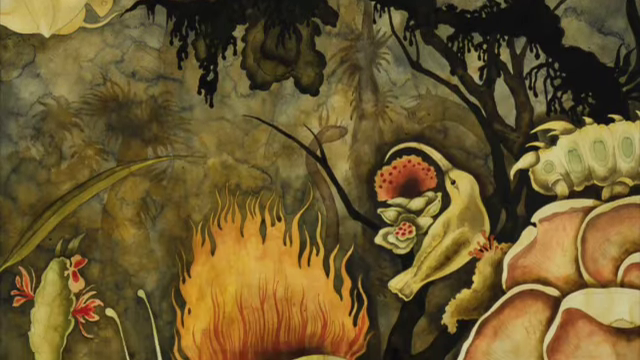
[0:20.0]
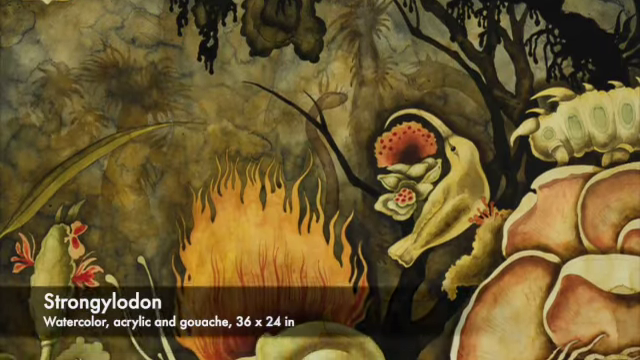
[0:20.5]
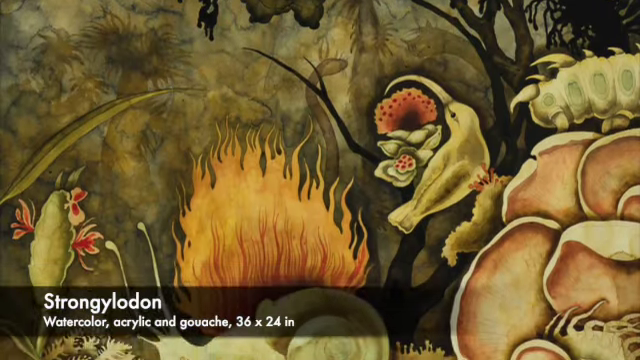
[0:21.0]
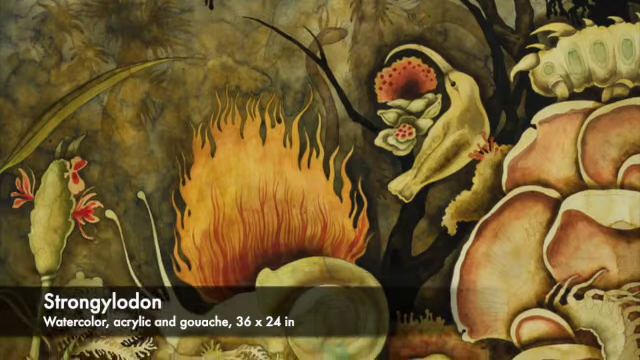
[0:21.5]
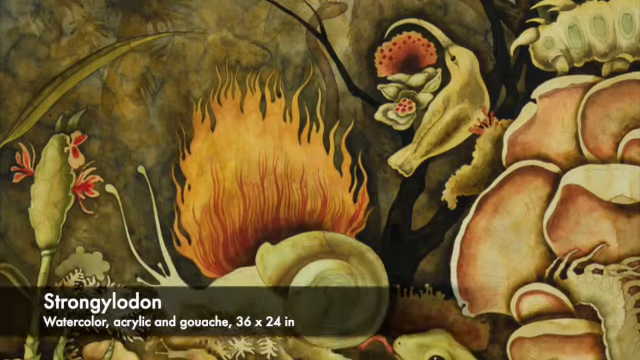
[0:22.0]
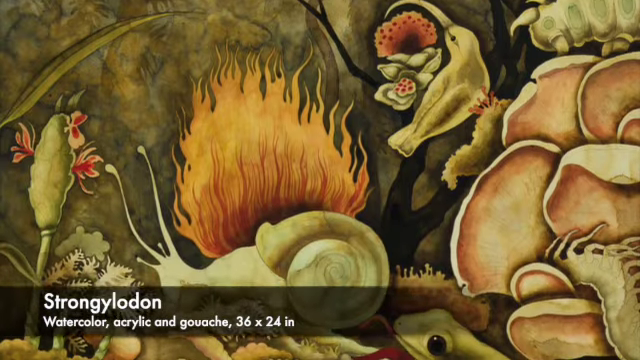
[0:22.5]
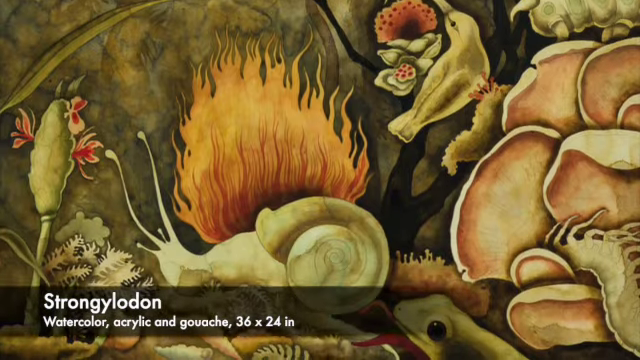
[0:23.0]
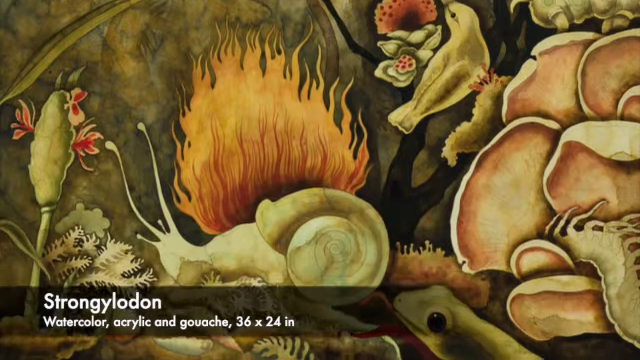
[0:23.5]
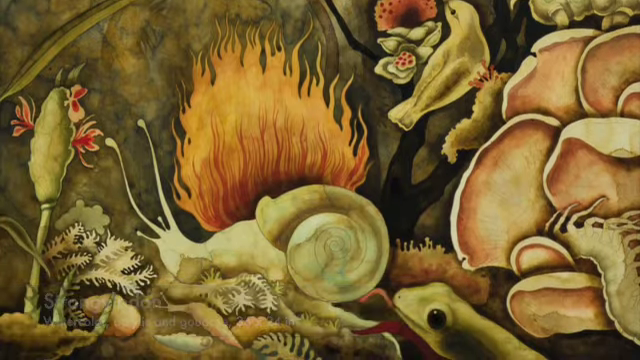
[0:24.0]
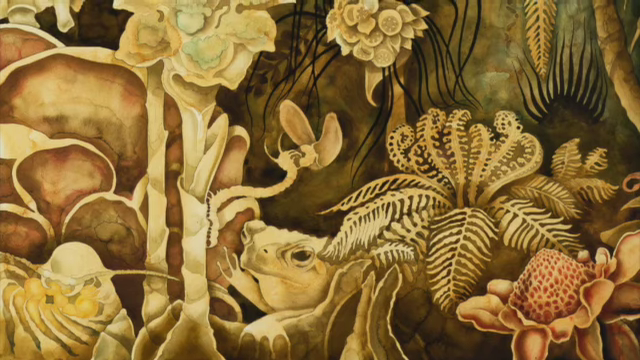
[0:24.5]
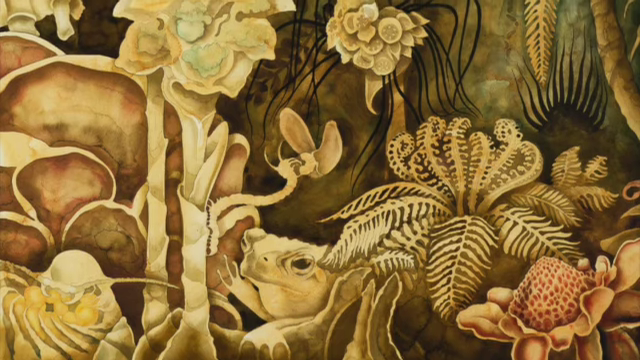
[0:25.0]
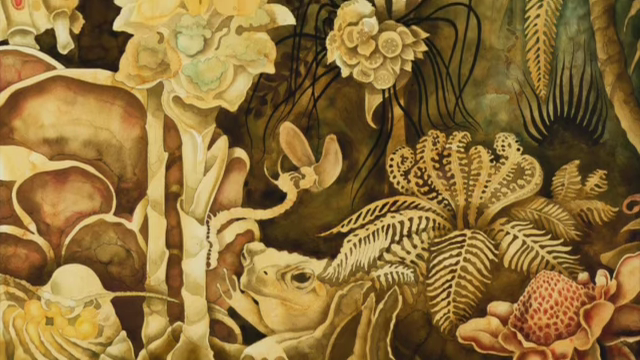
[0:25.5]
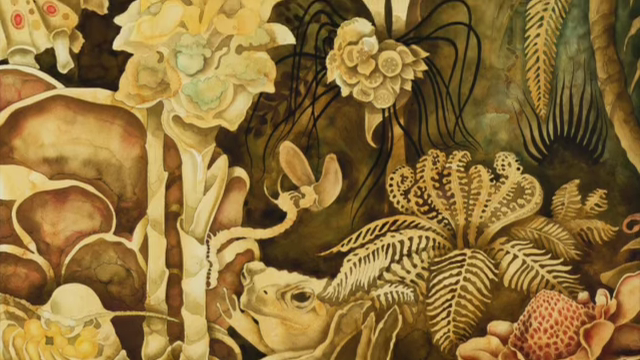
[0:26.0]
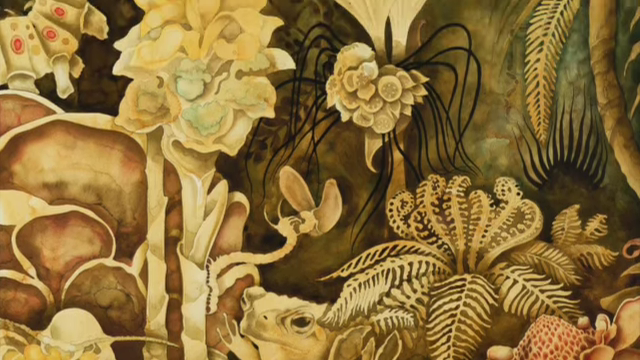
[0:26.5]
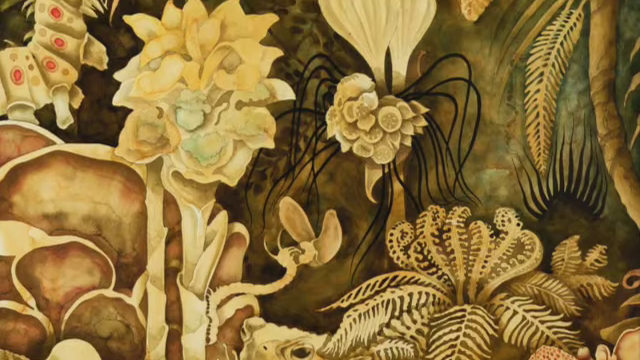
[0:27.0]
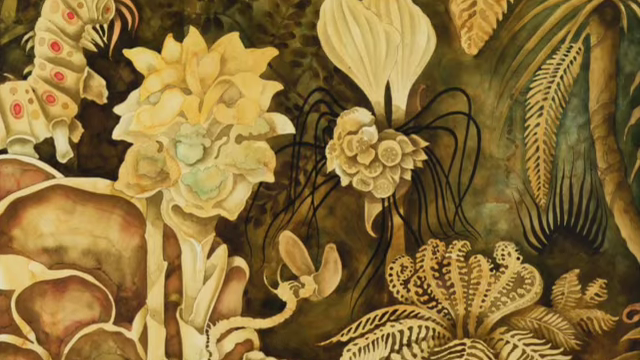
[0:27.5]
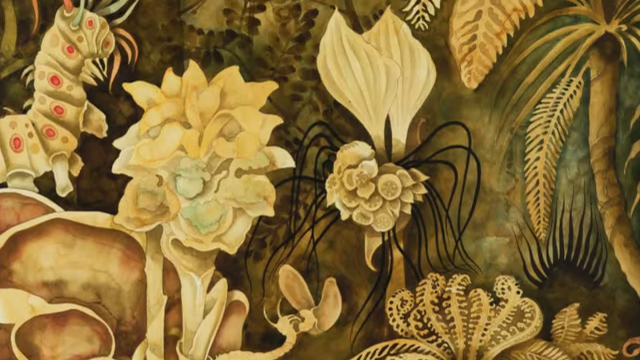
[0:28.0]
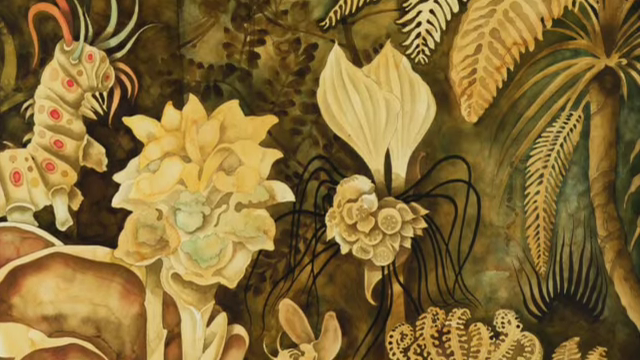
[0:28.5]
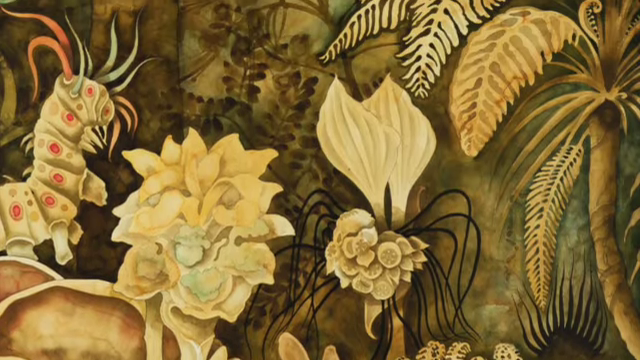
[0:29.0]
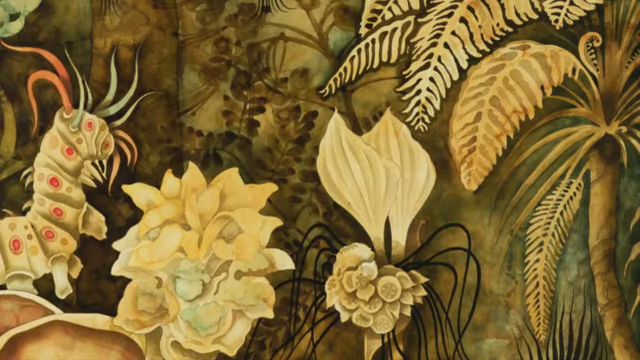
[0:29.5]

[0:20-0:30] The shot is focused on a section of the painting or mural showing the top of a flaming bush, a bird, a caterpillar on top of some mushrooms, some trees, parts of other plants, and some unidentified objects. The art has a lot of foreground as well as a faint background, creating a sense of depth similar to a camera image. The painting has a lot of depth and fantasy but also realism, with many yellowish-green musty tones. It is either a painted mural or an oil painting on canvas. The camera pans down to show the slug in front of the flaming bush, then cuts to another angle where a frog is among some mushrooms and flowers, almost hidden in the background of several plants. The camera pans up to more plants and more flowers.